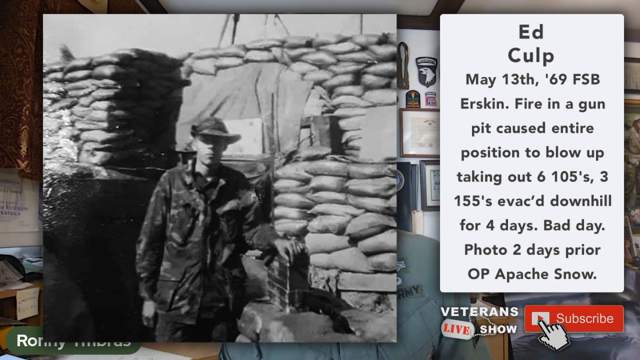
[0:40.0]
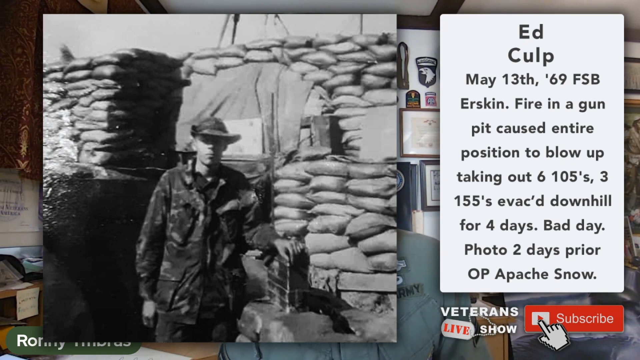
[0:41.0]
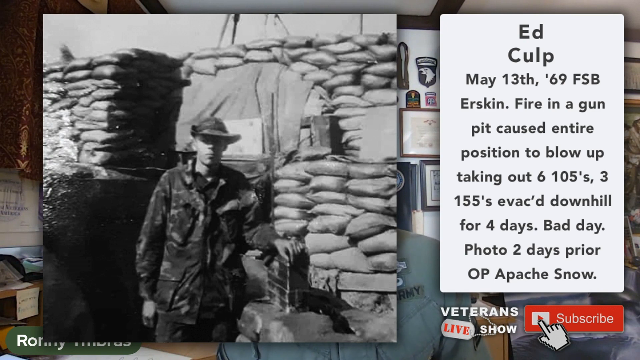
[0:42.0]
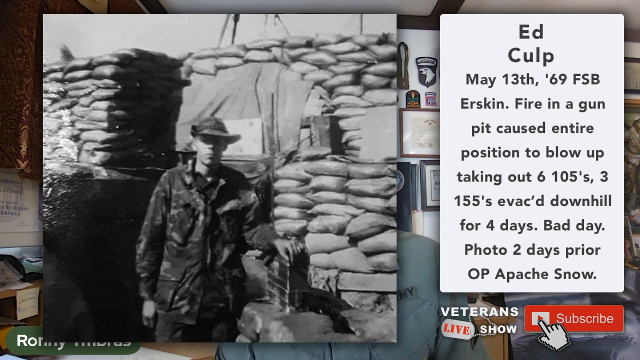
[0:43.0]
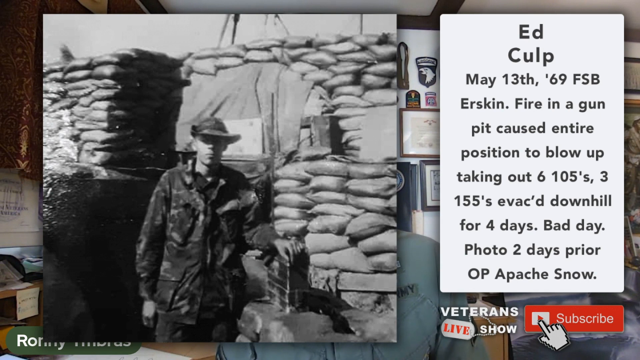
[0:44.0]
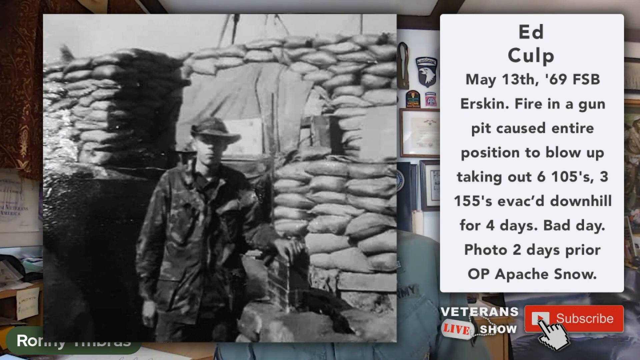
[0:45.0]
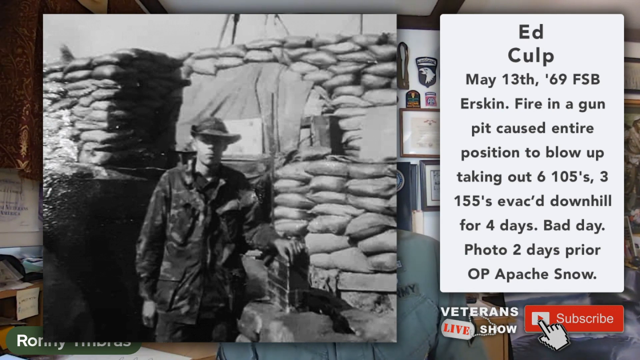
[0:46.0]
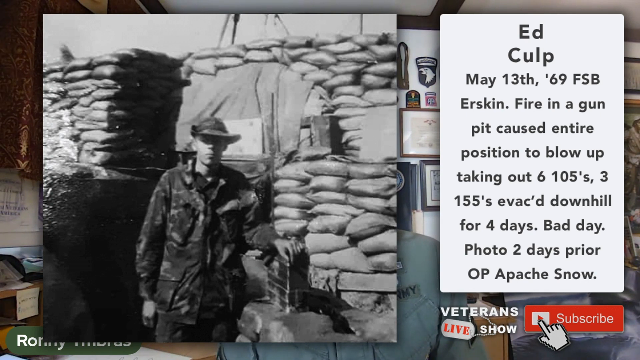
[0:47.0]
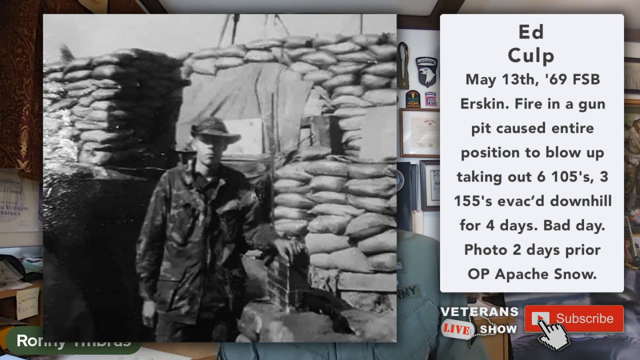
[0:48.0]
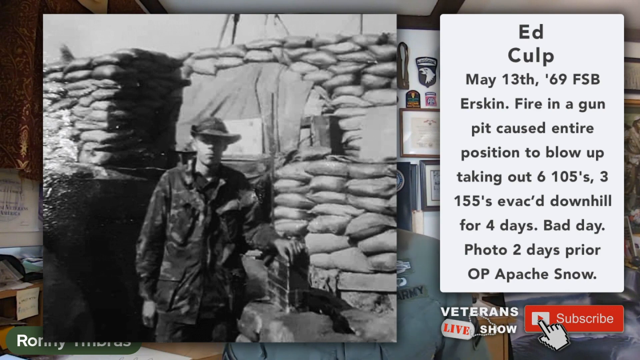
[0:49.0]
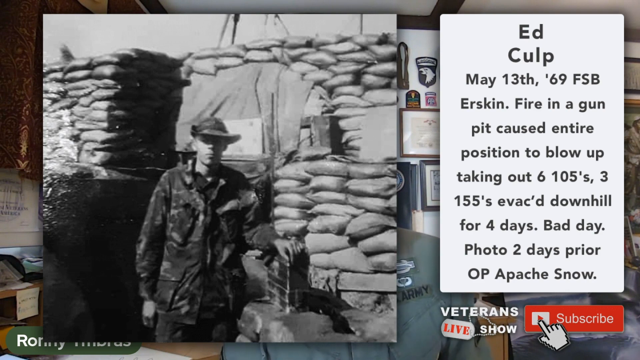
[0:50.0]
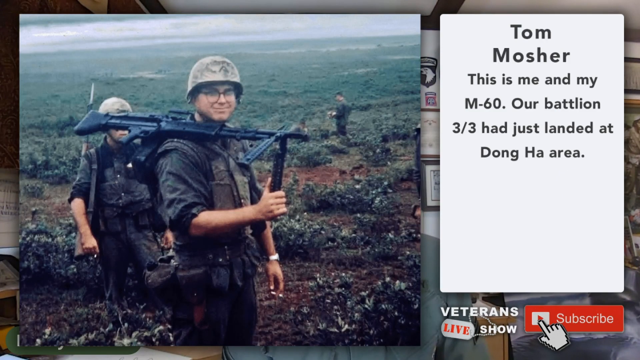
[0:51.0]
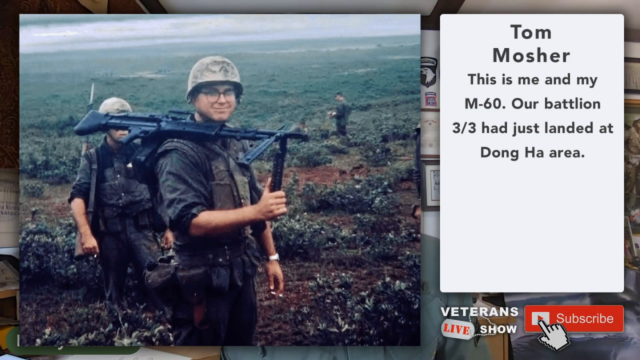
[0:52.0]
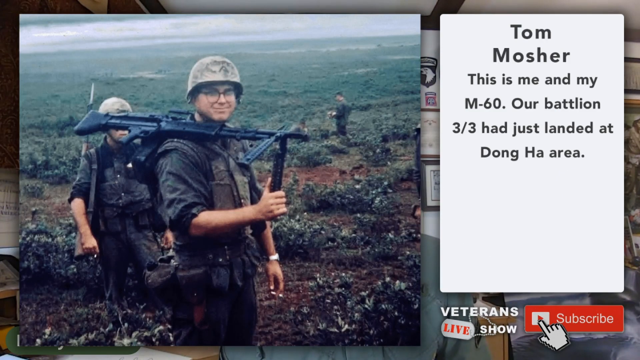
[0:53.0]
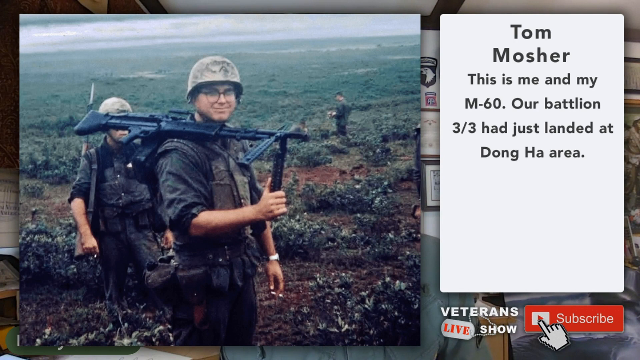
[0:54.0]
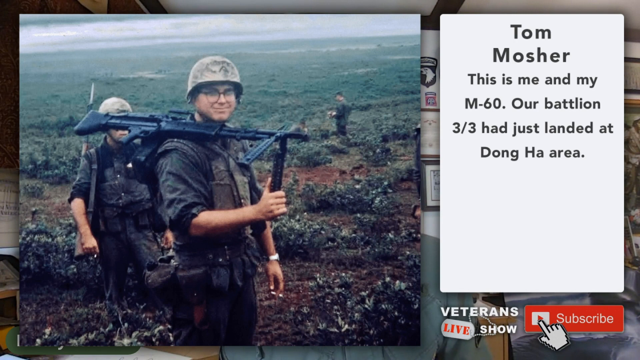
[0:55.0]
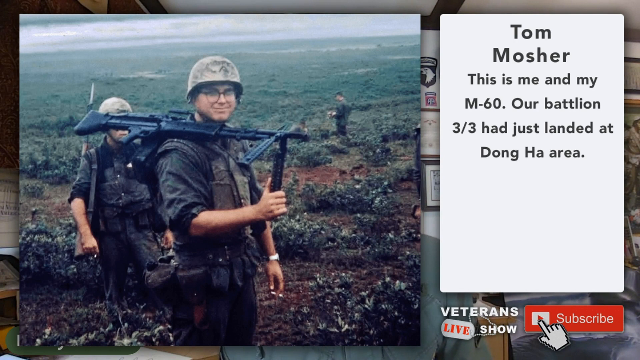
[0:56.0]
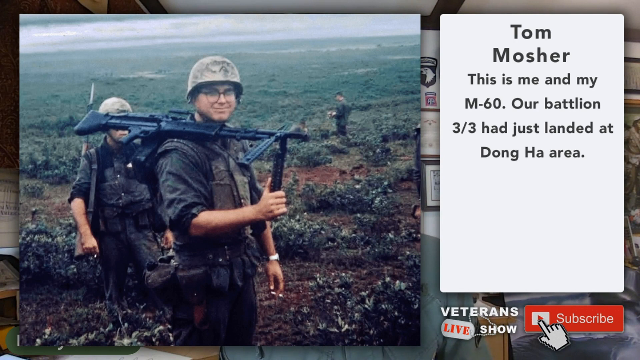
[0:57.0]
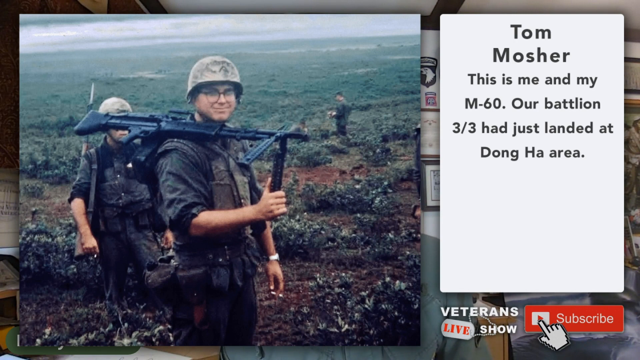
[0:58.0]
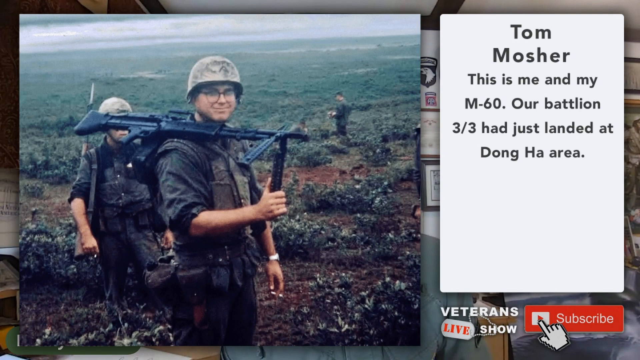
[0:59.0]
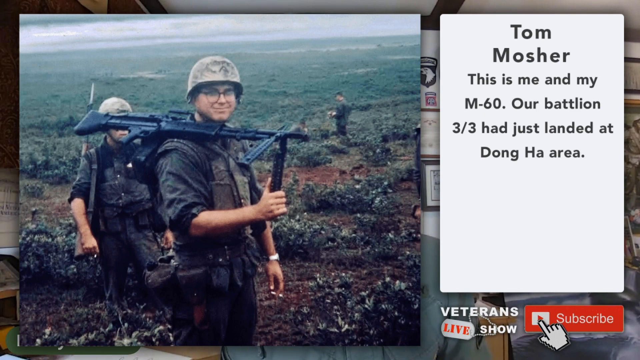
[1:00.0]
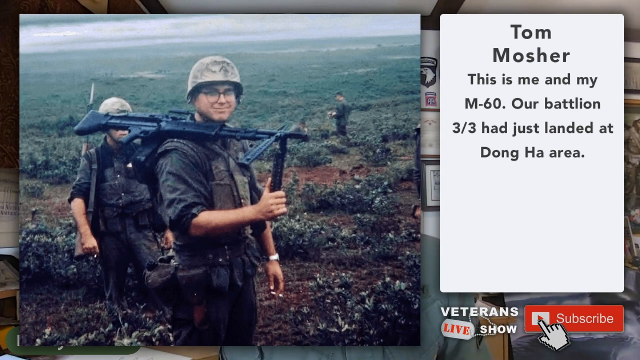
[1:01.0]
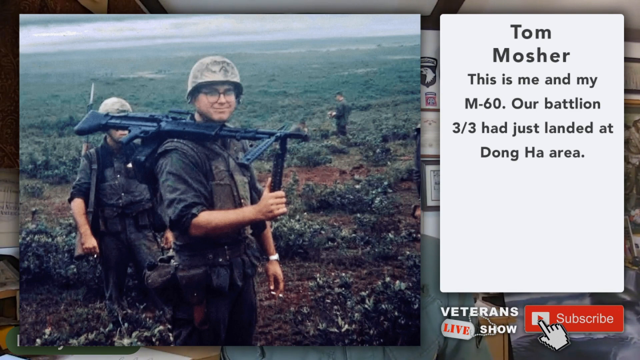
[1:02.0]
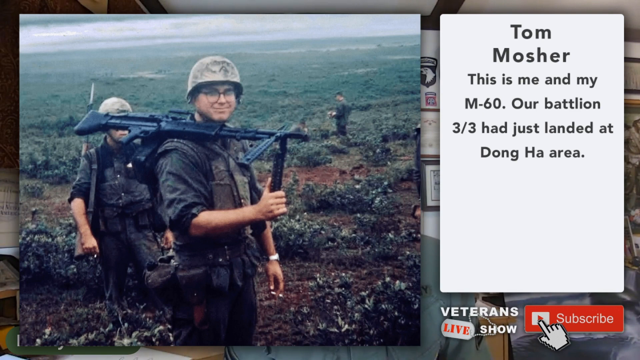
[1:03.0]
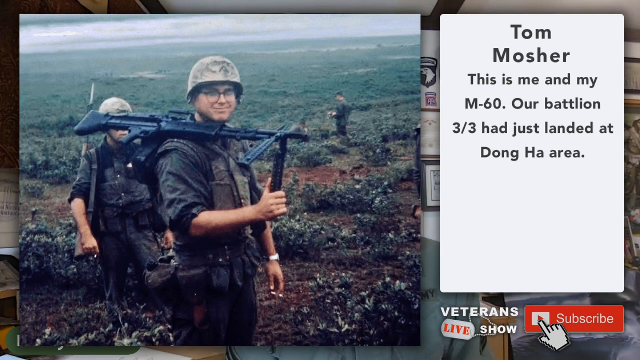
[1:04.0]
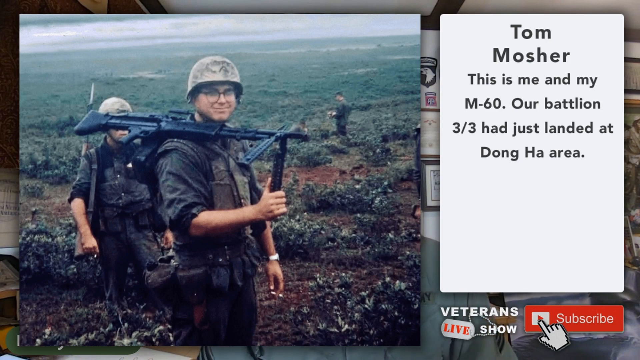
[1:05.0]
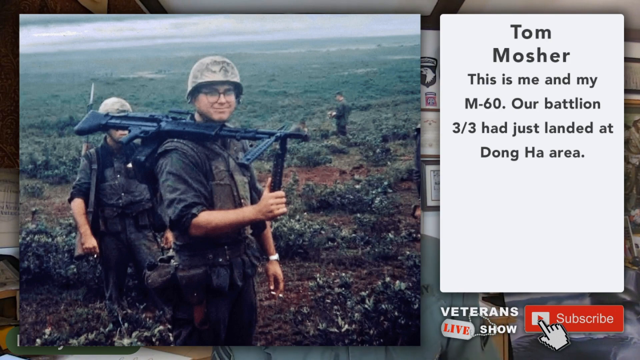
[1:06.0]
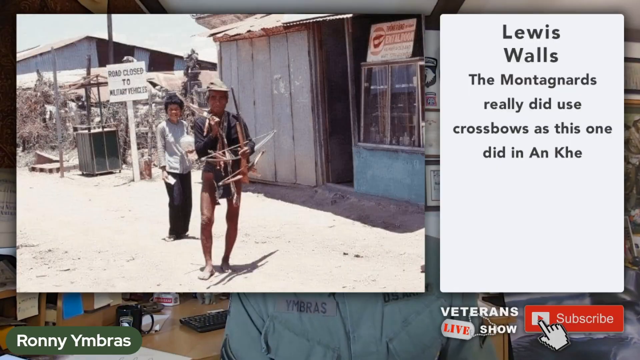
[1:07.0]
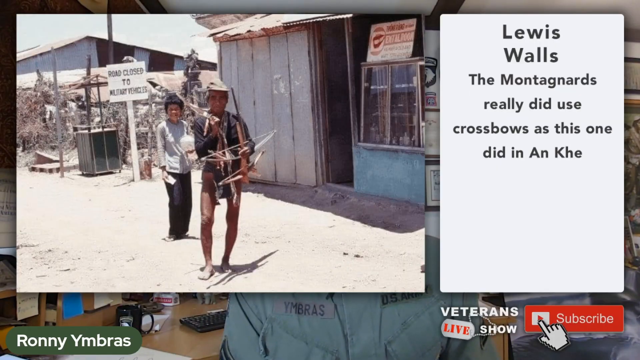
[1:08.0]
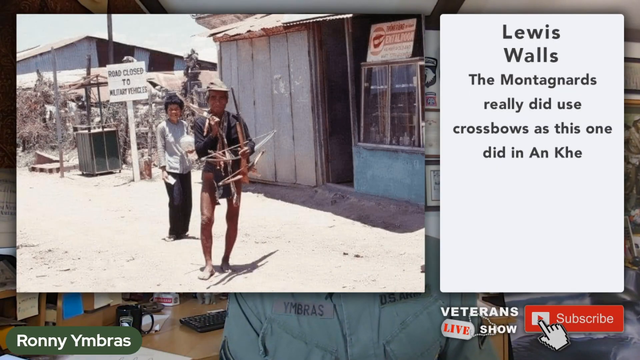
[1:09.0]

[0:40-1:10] The Ed Culp photo from May 13th, 1969 remains on screen, with its text about the fire in the gun pit that caused everything to explode, taking out six 105s and three 155s, the evacuation downhill for four days, and the words "it's a bad day"; the picture shows two days prior to that. The older man from the army is in the background, talking about the picture and maybe telling its story. He appears for a split second and then clicks to the next picture, labeled "Tom Mosher," with a caption reading "this is me and my M60" and mentioning his battalion at Dong Ha. Tom is holding what appears to be an M60, with a soldier behind him; they are wearing helmets. Tom has glasses on and a watch on his left hand, and holds the gun on his right shoulder with his right hand. The background is all green, like bushes. Another man is in the distance facing away from the camera, roughly toward nine o'clock, and is a little hard to see. The older man apparently describes the picture, and he is seen very briefly. The next picture is from Lewis Walls, with the text "the Montagnards really did use crossbows as this one did in An K'hi." It shows what is kind of like a desert area with an older building, a sign saying "the road is closed," a woman, and a man with a crossbow.